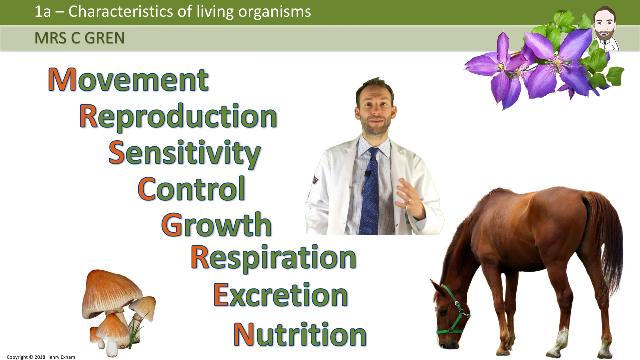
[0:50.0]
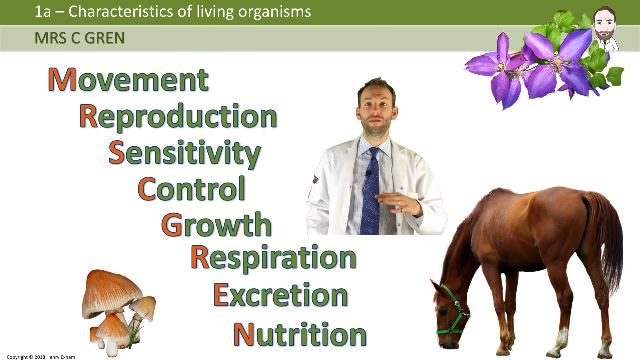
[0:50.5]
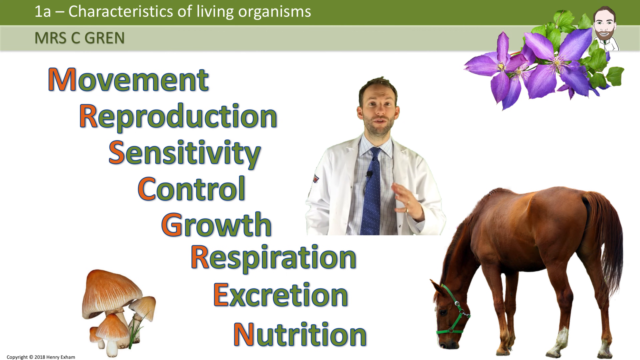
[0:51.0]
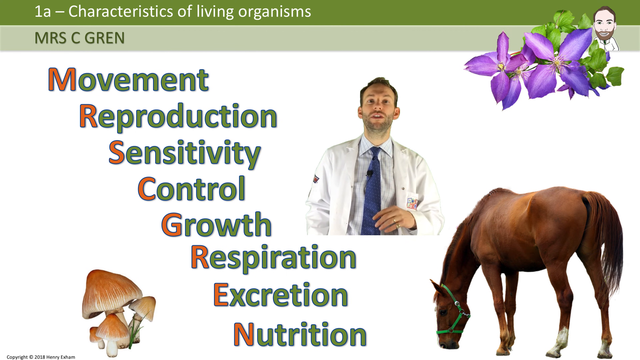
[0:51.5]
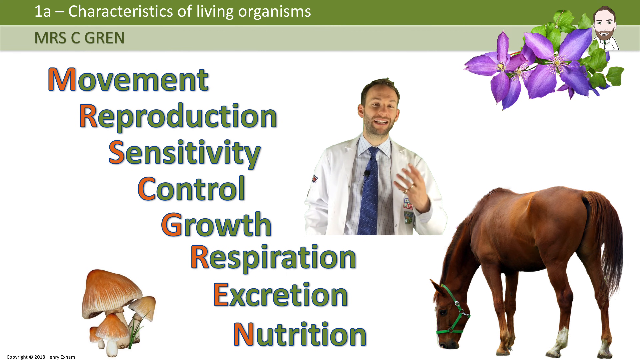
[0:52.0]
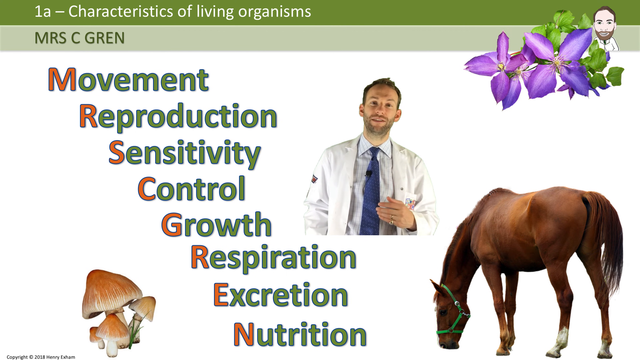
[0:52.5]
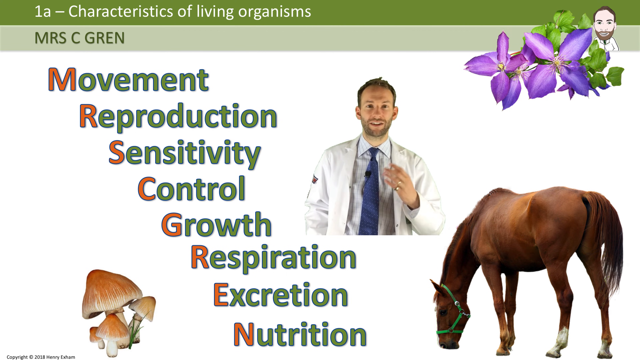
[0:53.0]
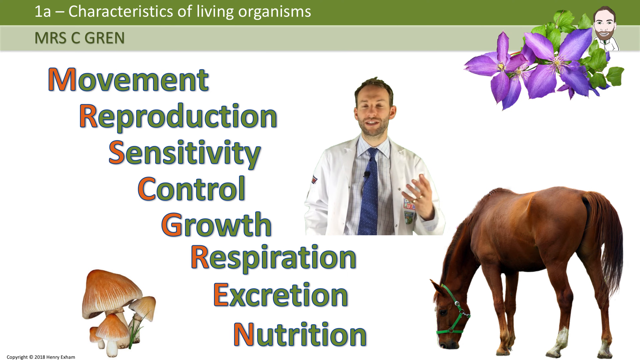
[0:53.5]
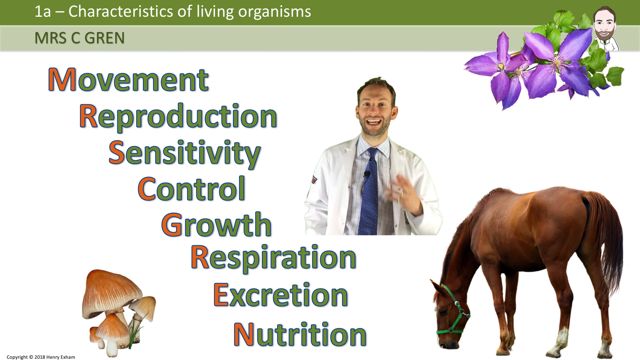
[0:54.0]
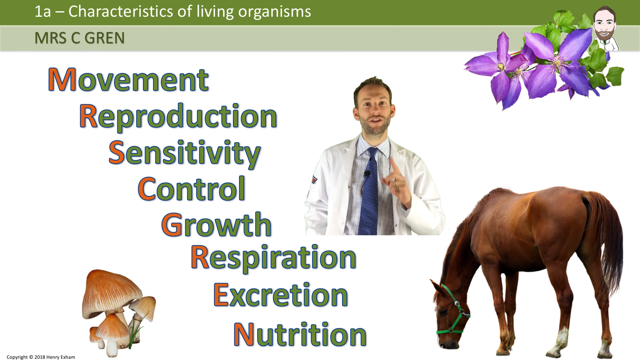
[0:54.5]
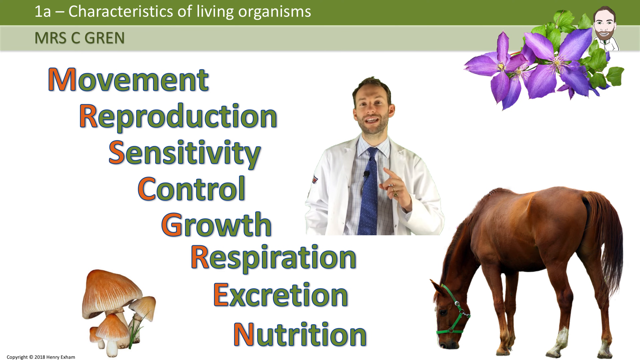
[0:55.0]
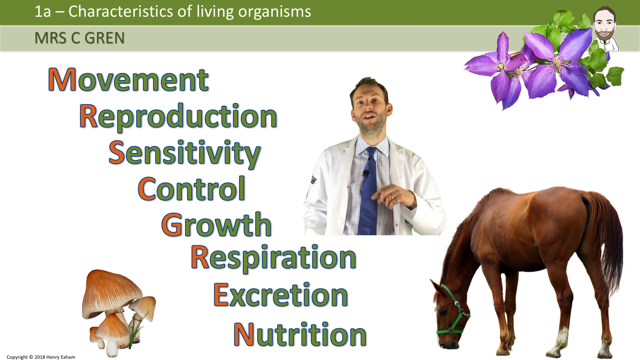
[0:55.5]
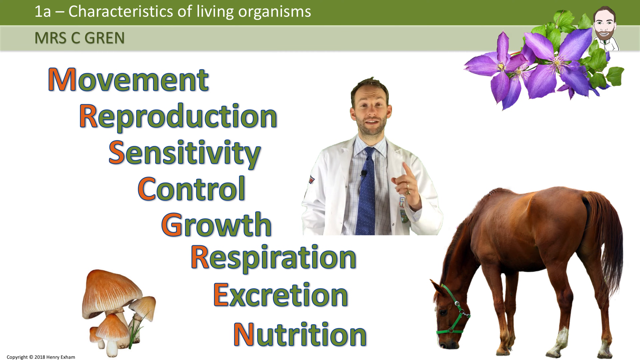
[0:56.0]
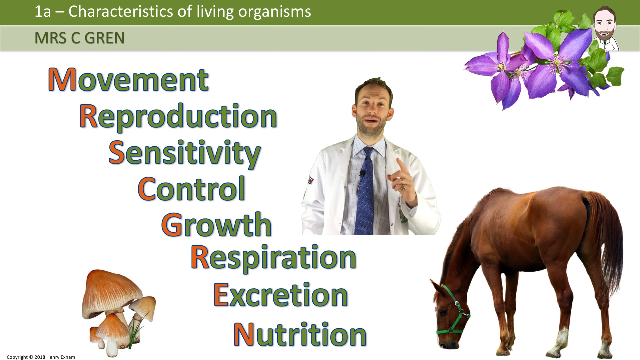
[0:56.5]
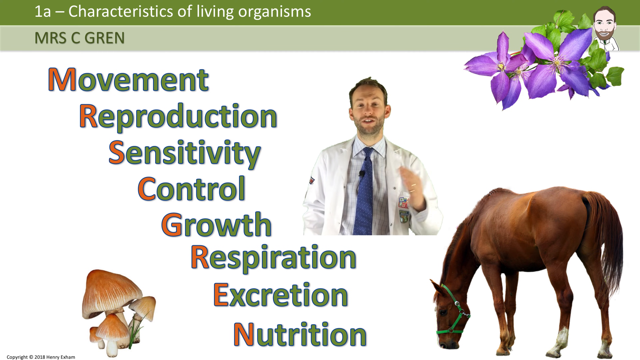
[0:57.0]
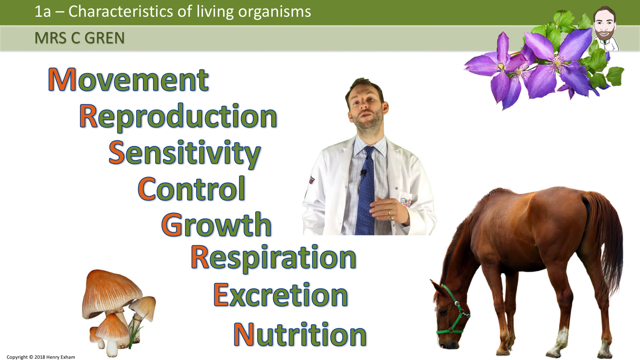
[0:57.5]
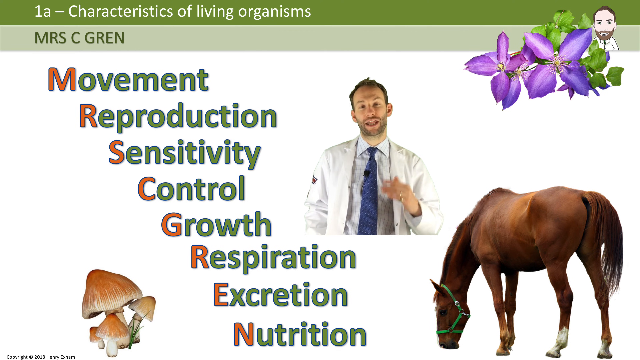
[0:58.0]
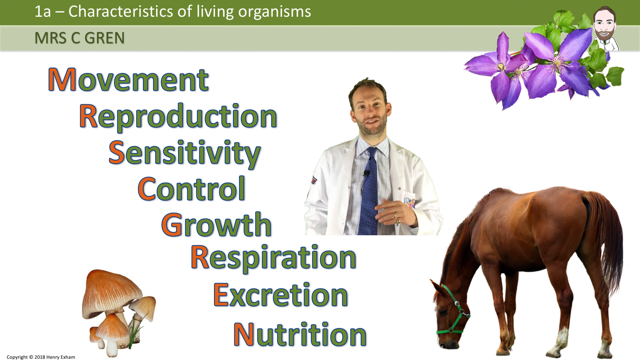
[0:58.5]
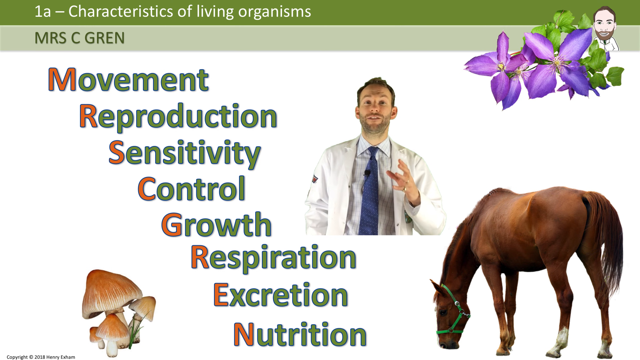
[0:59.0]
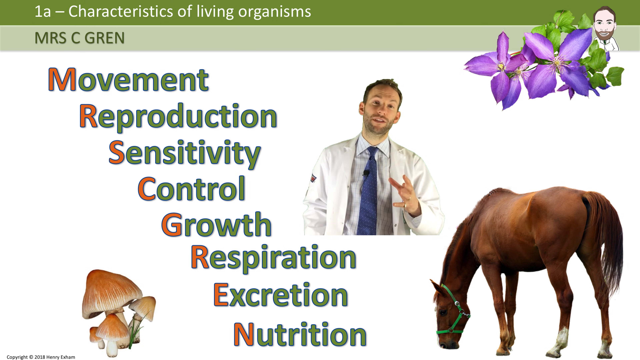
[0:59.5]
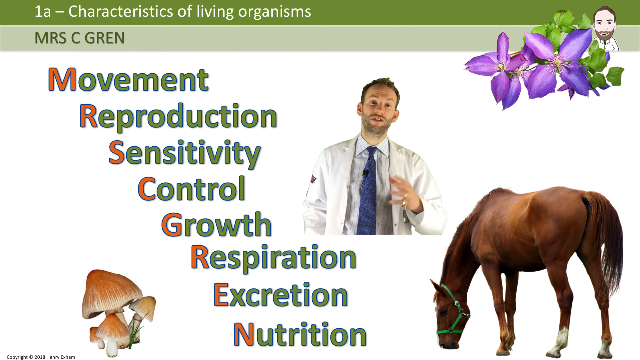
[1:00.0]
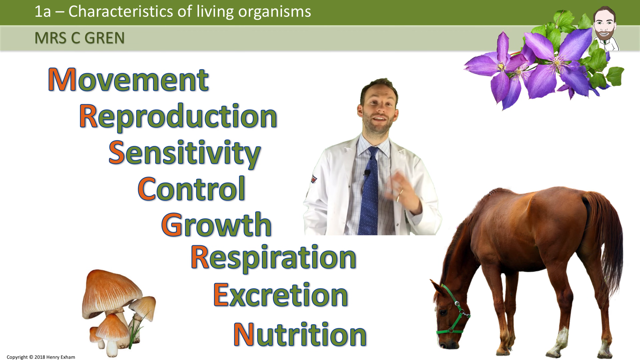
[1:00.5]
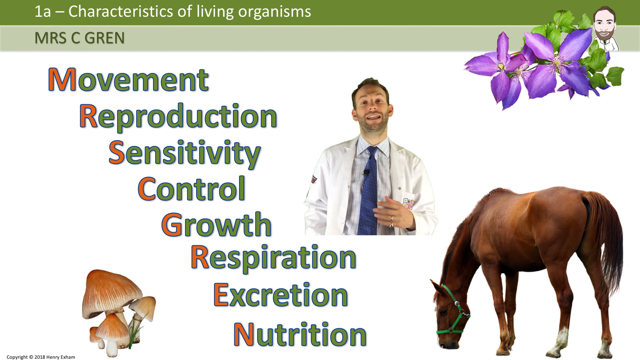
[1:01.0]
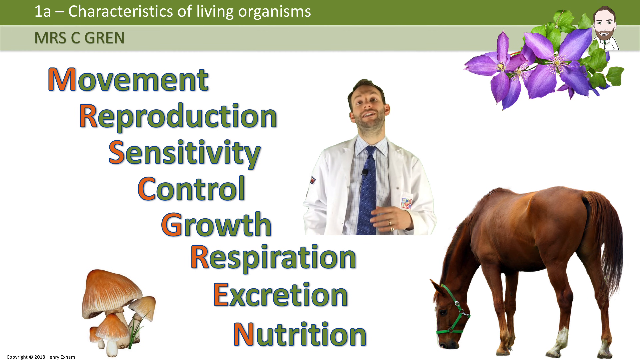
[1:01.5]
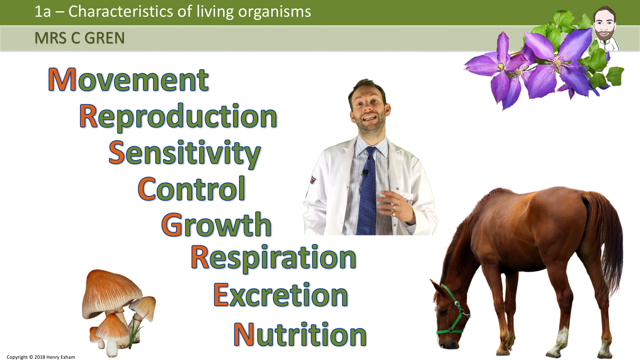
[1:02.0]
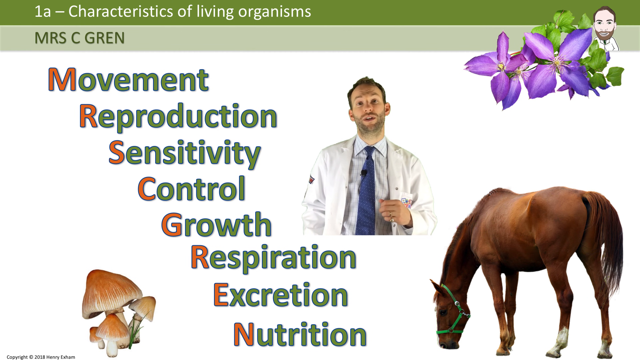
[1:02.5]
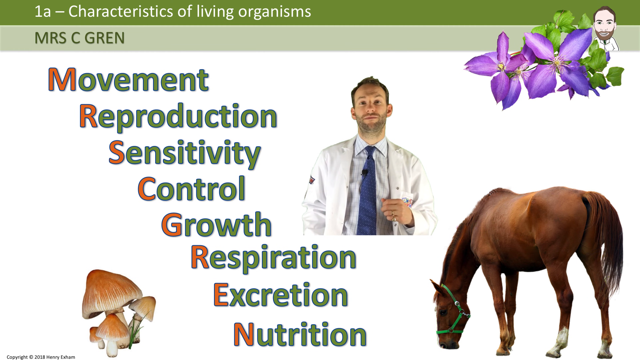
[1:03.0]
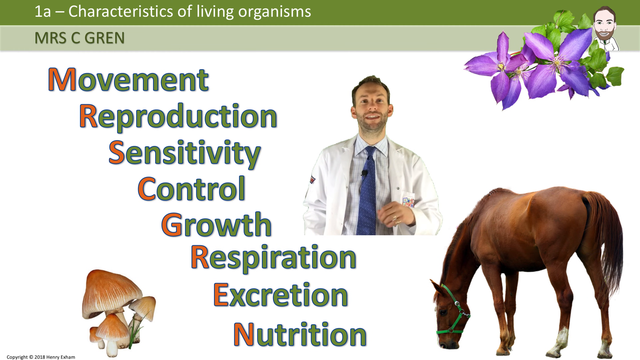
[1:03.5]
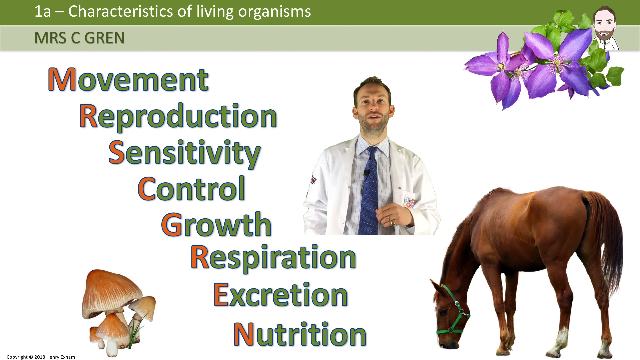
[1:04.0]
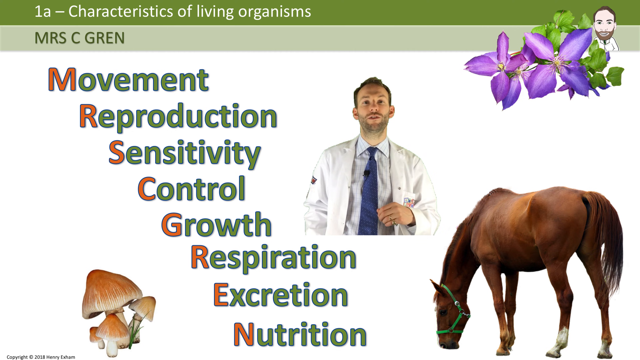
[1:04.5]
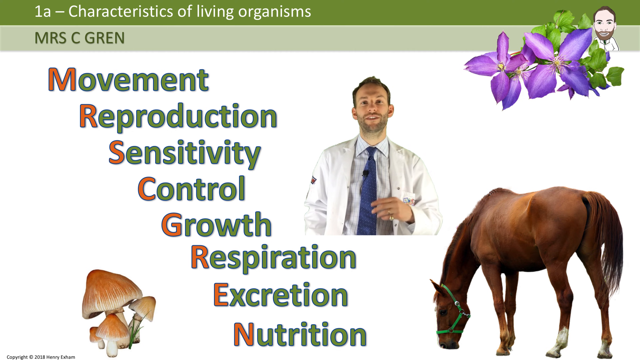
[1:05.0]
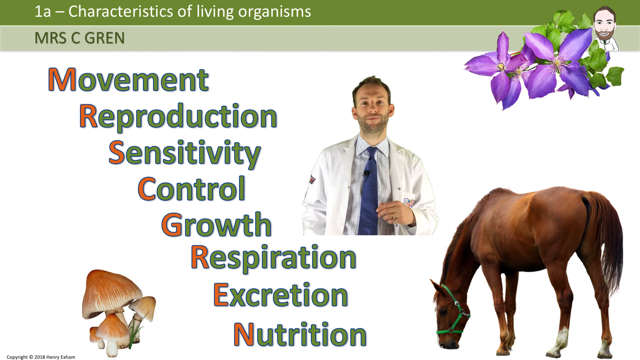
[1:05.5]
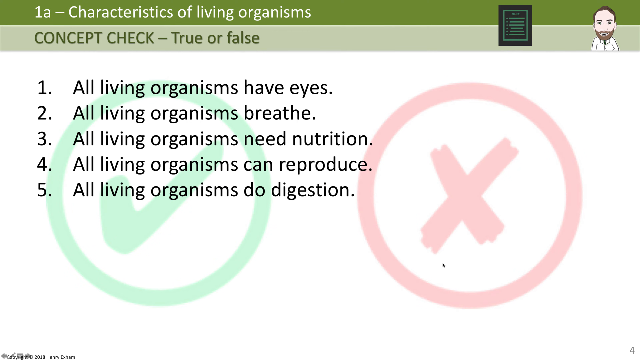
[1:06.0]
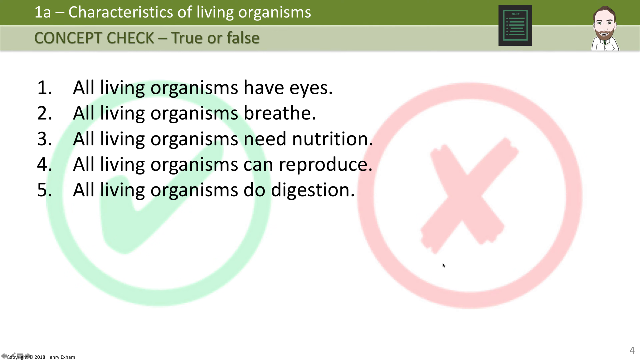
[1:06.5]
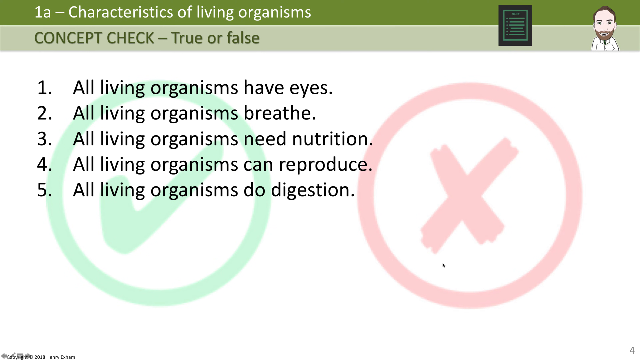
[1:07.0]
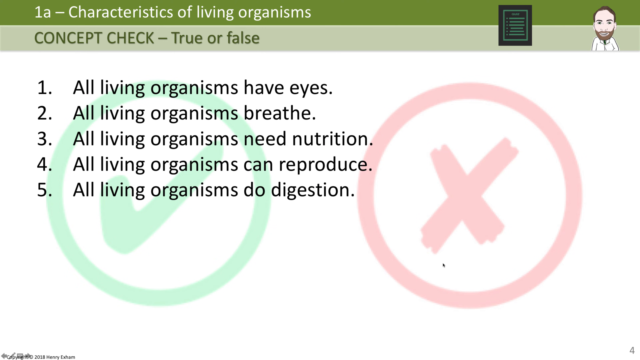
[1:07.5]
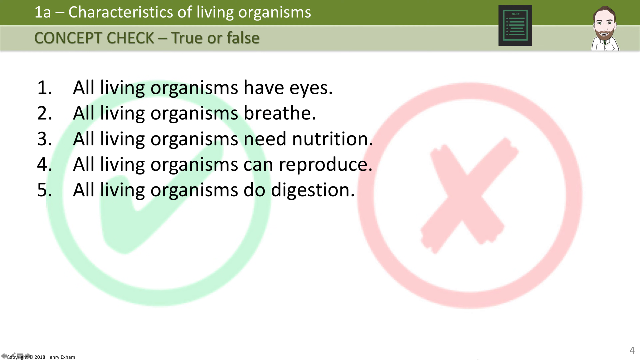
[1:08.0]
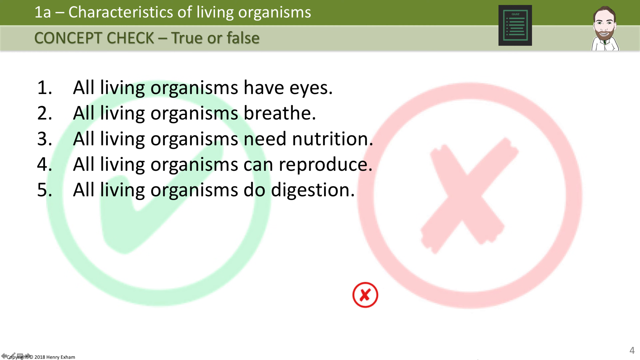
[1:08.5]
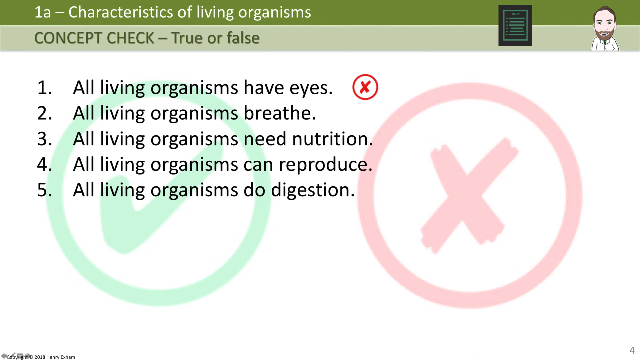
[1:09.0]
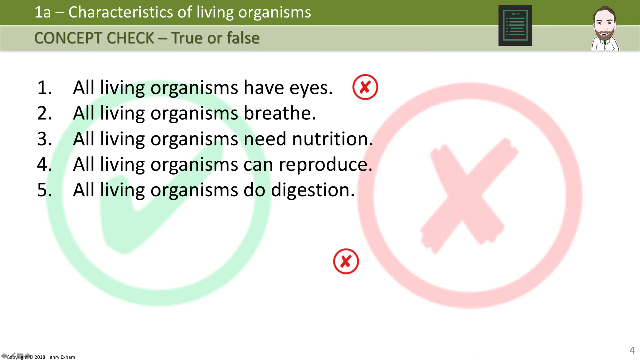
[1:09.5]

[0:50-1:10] The scientist is still gesturing with his hands and speaking towards the audience. The brown horse remains in the bottom right, the mushrooms in the bottom left, and the flowers and the cartoon of the scientist in the top right. The scene transitions to a new page with a white background and a green banner at the top that says "concept check, true or false". There are semi-opaque images: on the right a red X with a circle, and on the left a green check mark with a circle. The first point says "all living organisms have eyes", the second "all living organisms breathe", the third "all living organisms need nutrition", the fourth "all living organisms can reproduce", and the fifth "all living organisms do digestion". Red X's with circles around them appear from the bottom and are placed beside the first two sentences.